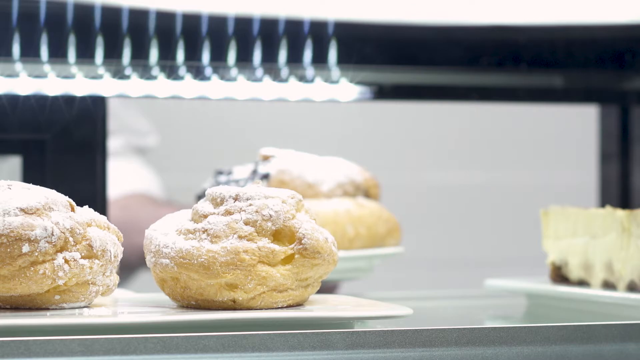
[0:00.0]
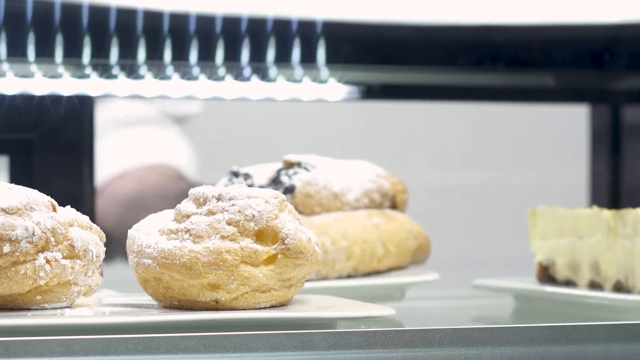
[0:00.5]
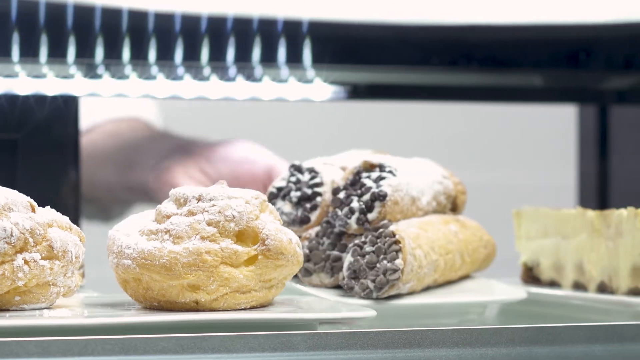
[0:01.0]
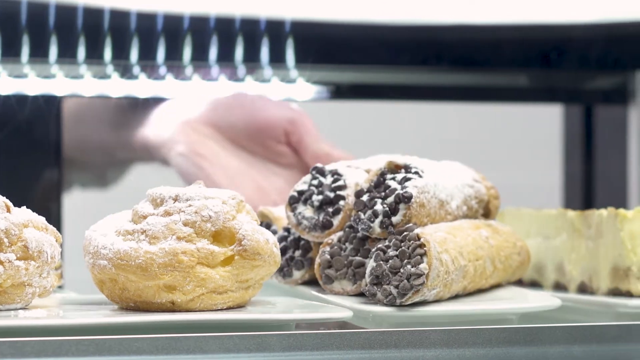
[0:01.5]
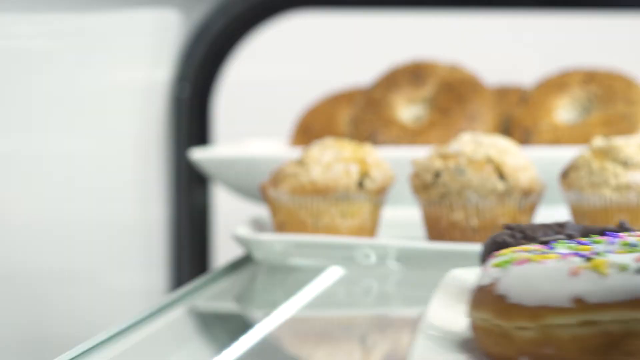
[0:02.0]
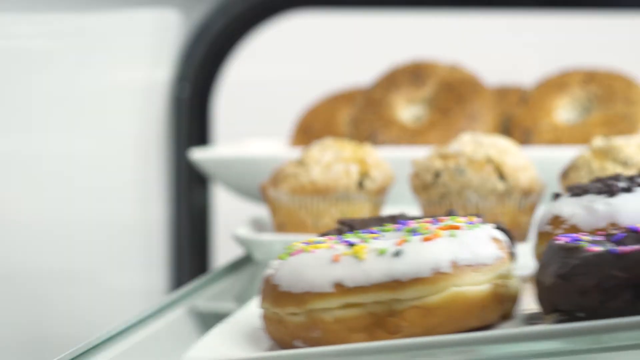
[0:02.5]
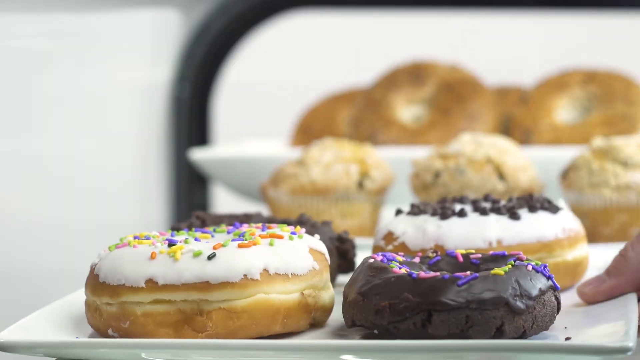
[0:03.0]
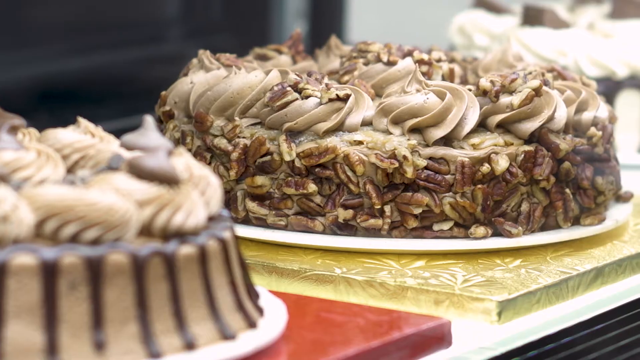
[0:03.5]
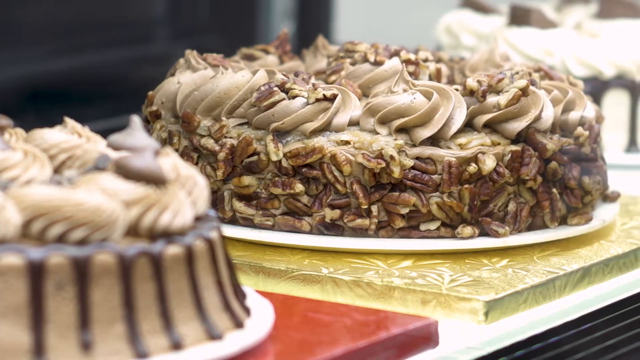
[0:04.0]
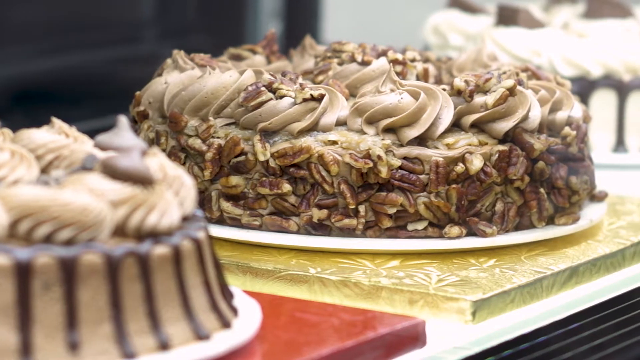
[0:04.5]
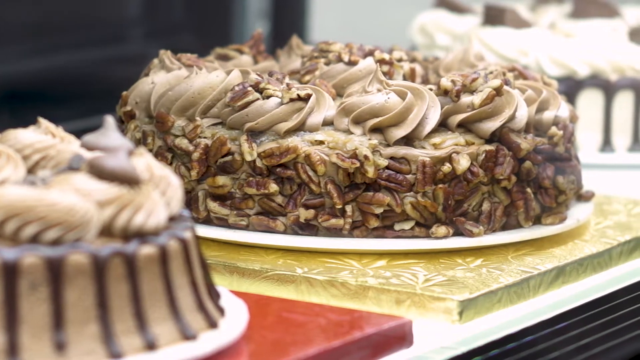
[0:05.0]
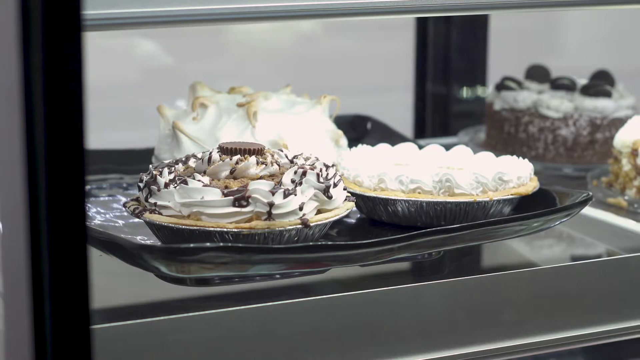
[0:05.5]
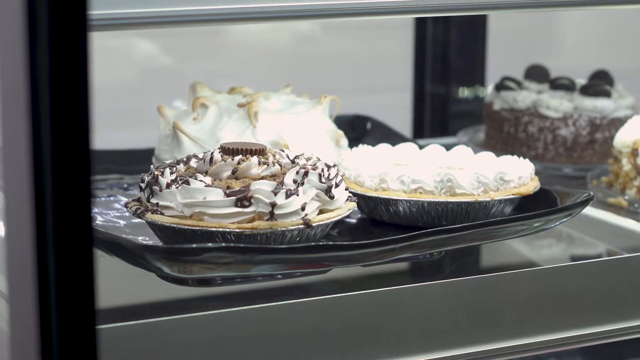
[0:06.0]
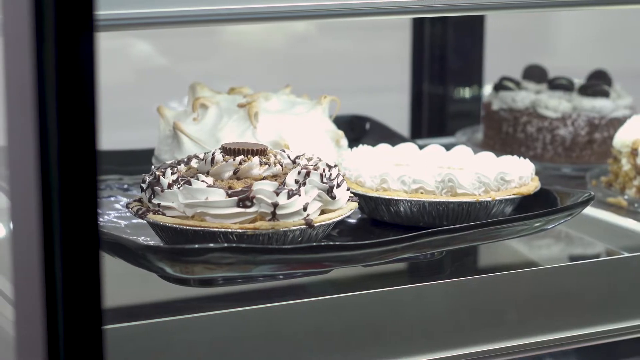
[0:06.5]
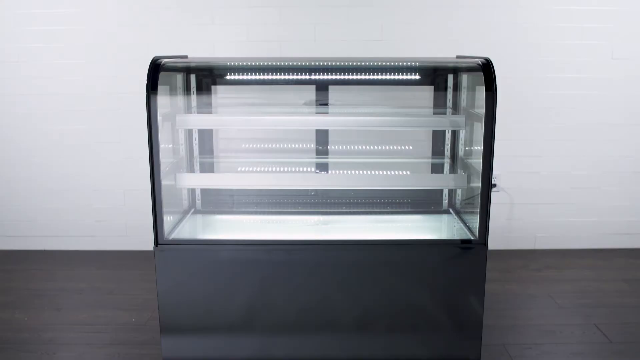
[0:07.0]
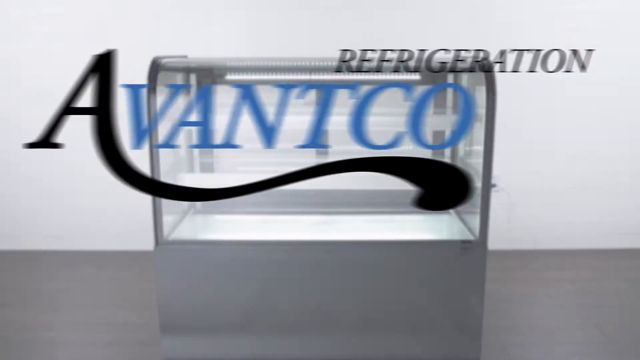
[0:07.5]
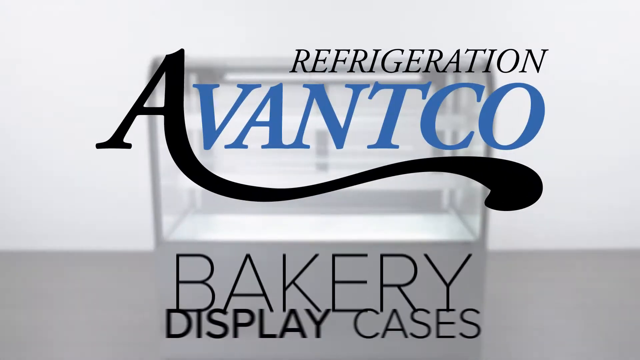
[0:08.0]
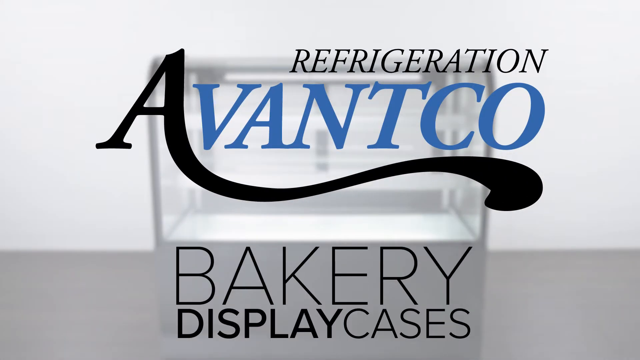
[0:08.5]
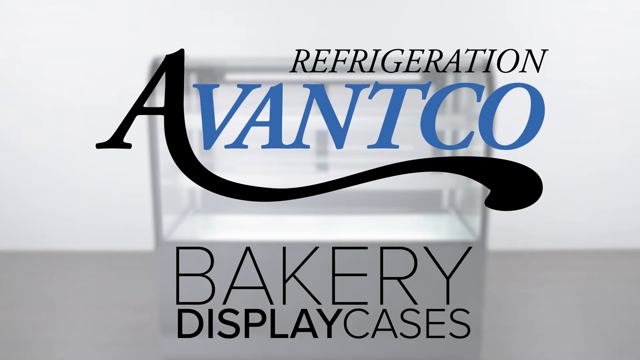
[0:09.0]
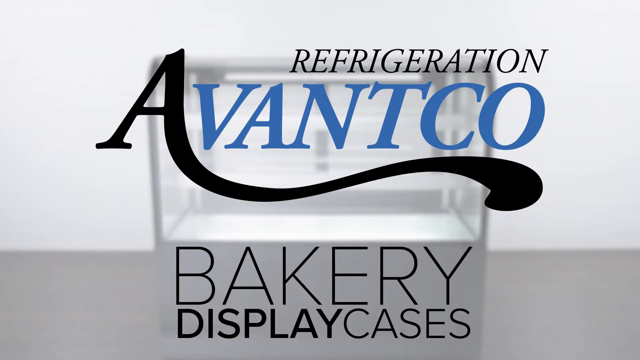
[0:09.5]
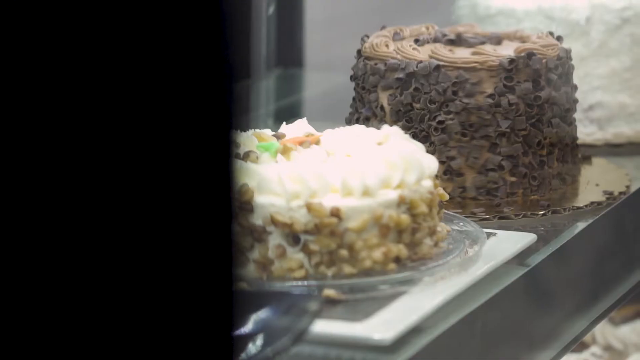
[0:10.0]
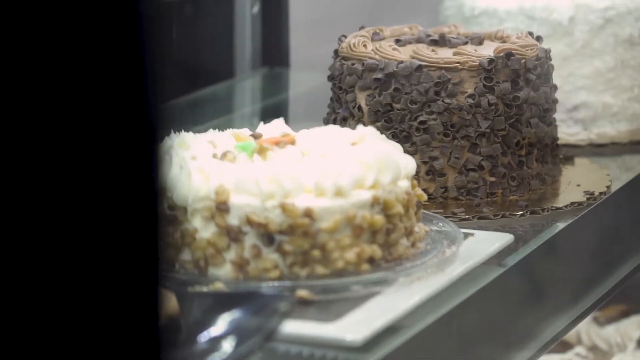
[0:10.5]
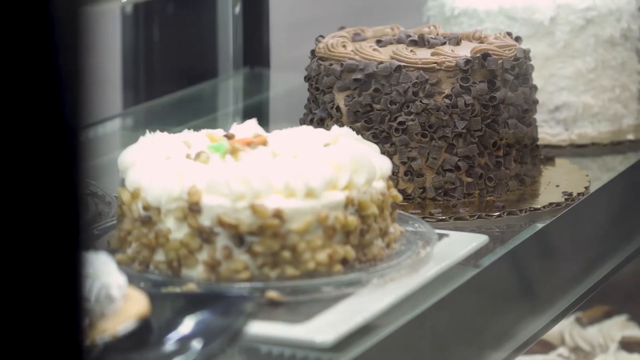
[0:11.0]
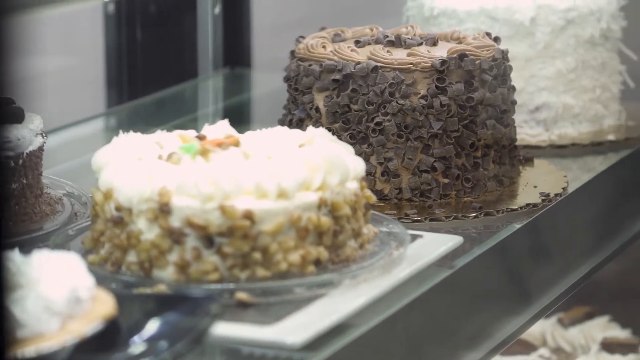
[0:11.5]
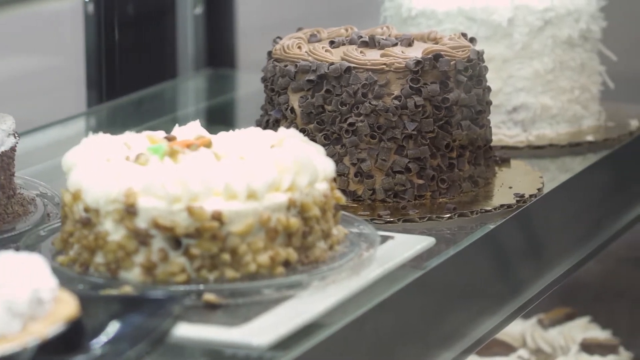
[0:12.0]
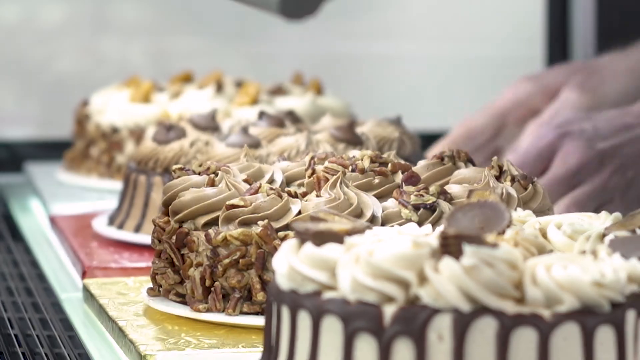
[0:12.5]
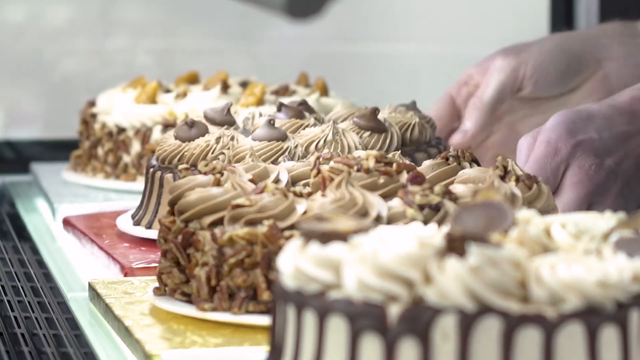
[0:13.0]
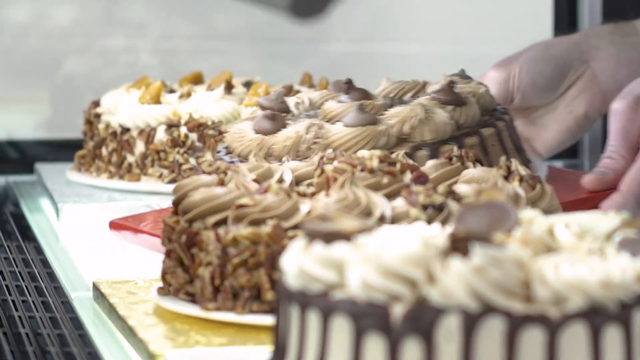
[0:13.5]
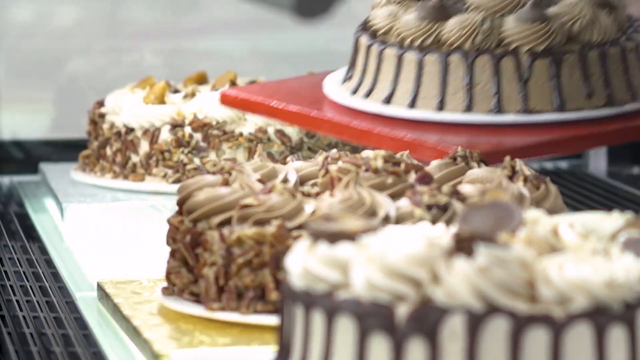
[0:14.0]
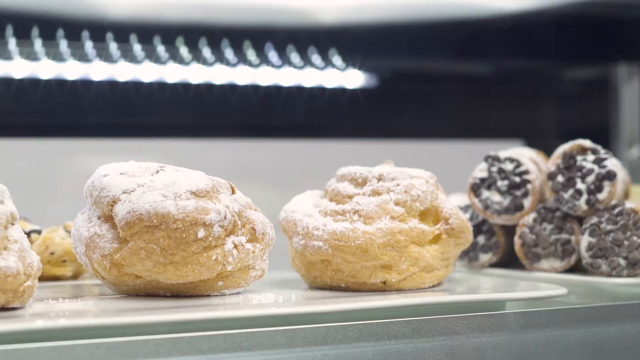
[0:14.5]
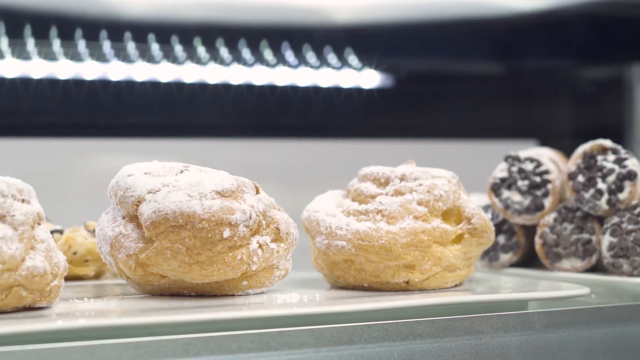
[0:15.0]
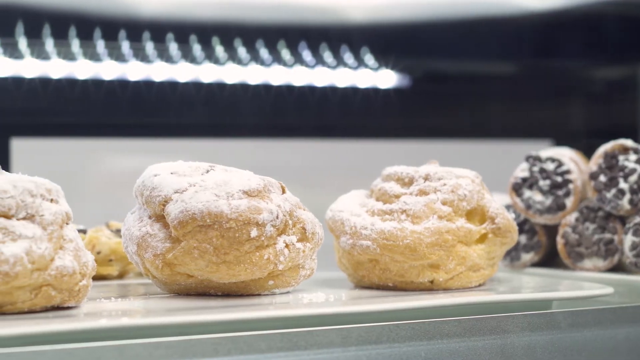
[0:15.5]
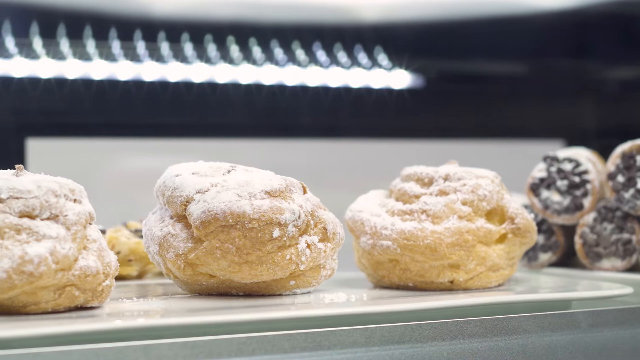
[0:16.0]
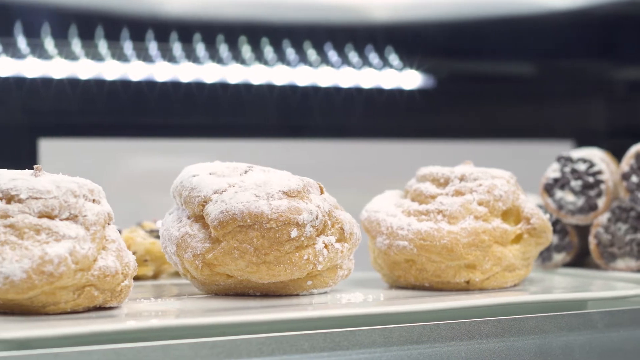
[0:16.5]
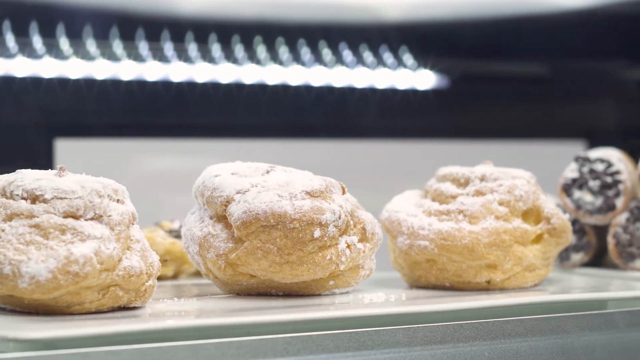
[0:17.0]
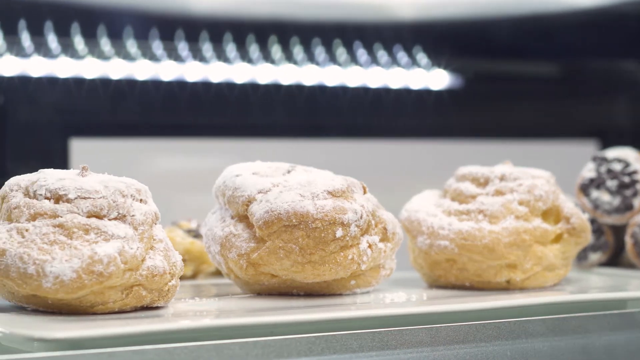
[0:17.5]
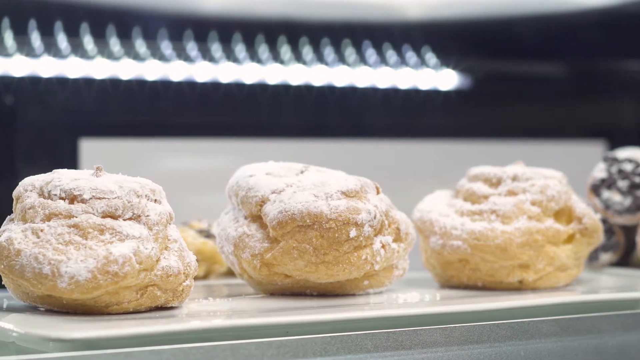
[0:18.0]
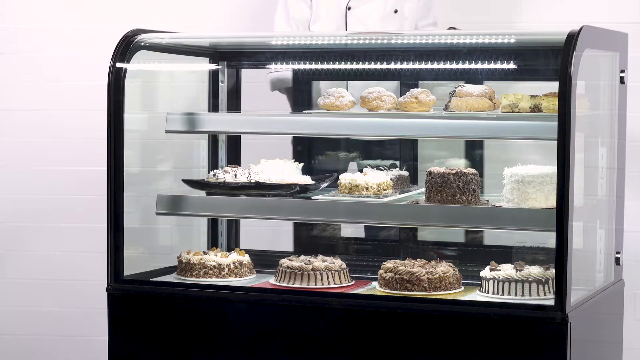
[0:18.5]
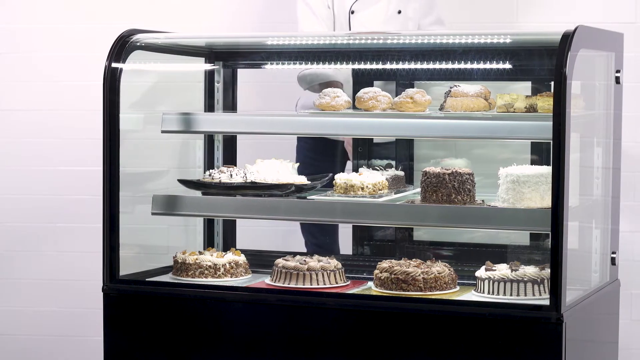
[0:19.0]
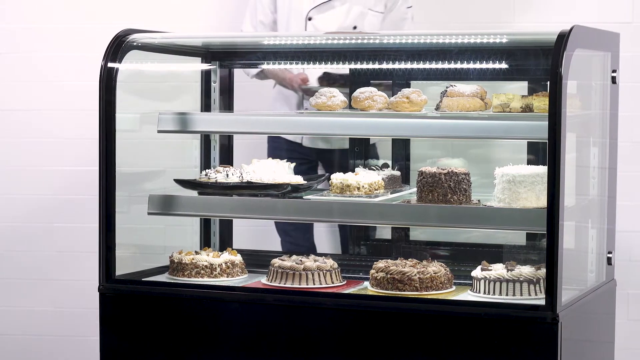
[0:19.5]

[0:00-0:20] Pastries and cakes fill refrigerated bakery display cases. There are cupcakes, donuts and different types of cakes, and there appear to be donuts of different types with filling inside. A chocolate cake is visible, along with another cake topped with nuts; some cakes are decorated with cashew nuts, and another cake has different kinds of decoration. All kinds of pastries are on display in what is a bakery shop.